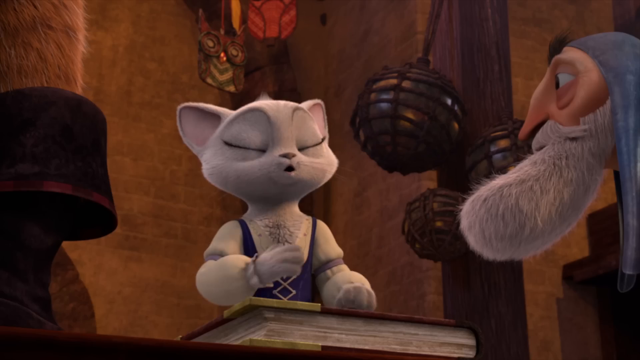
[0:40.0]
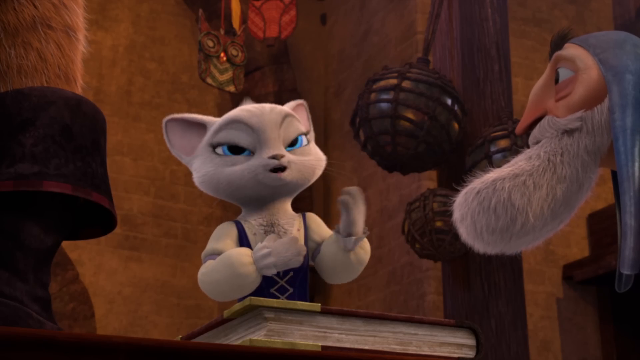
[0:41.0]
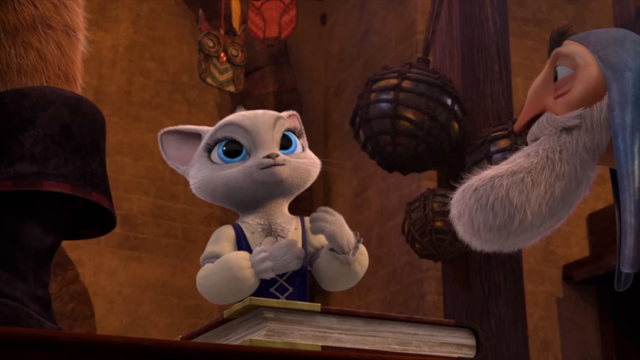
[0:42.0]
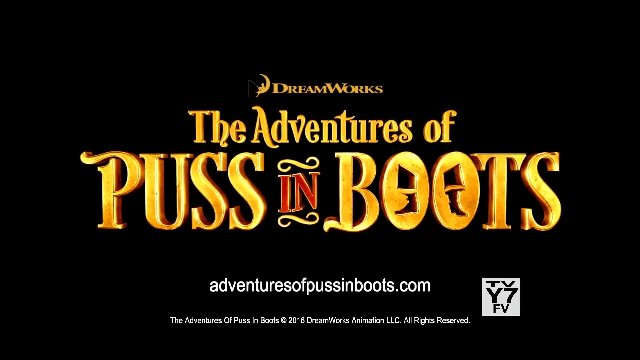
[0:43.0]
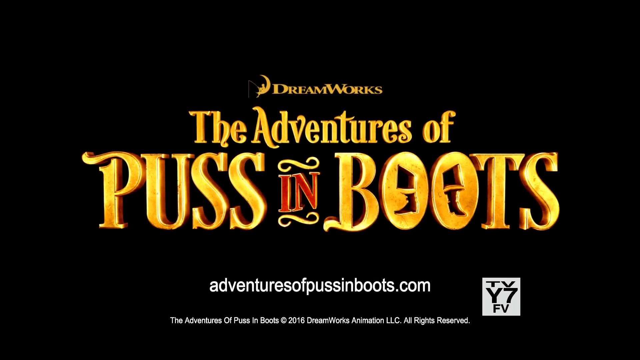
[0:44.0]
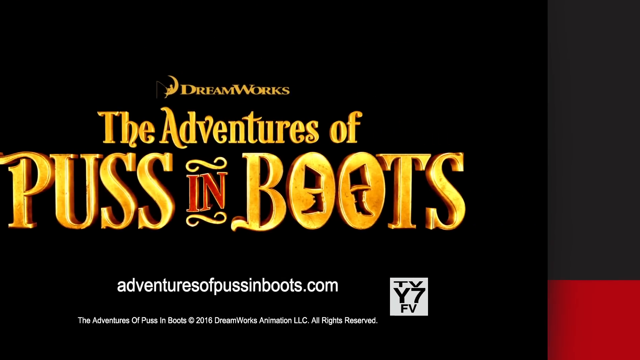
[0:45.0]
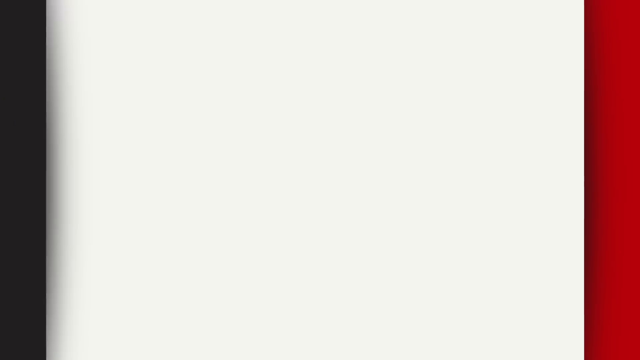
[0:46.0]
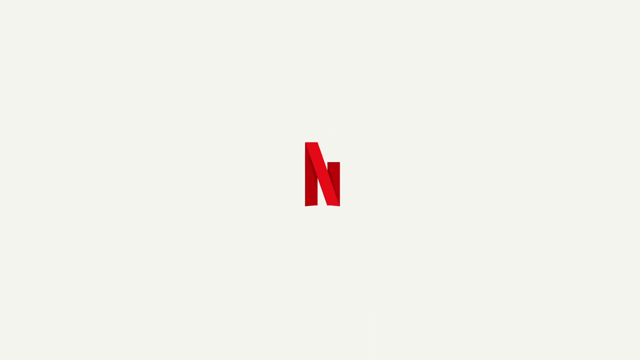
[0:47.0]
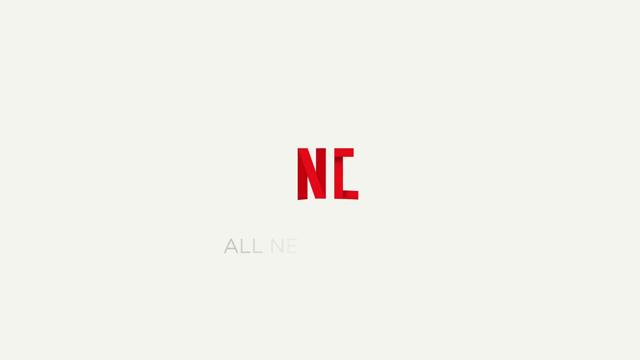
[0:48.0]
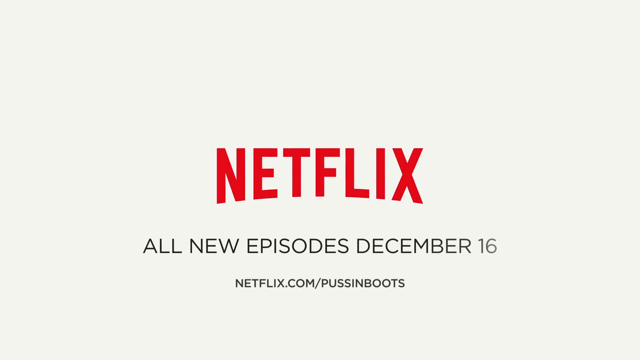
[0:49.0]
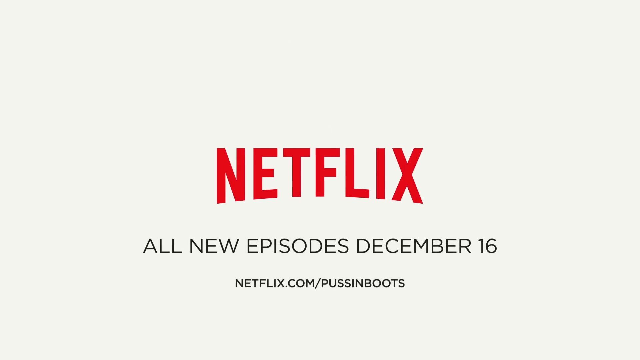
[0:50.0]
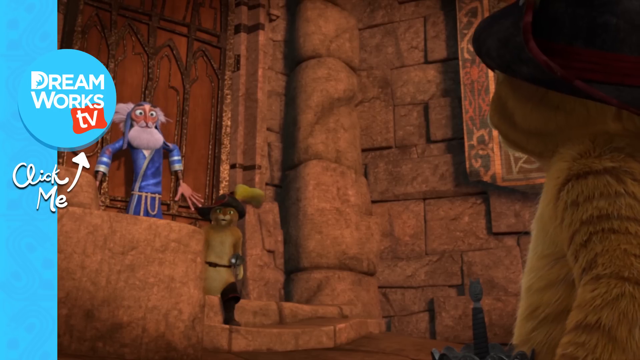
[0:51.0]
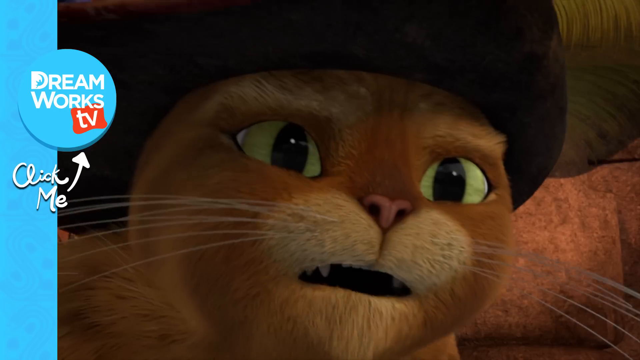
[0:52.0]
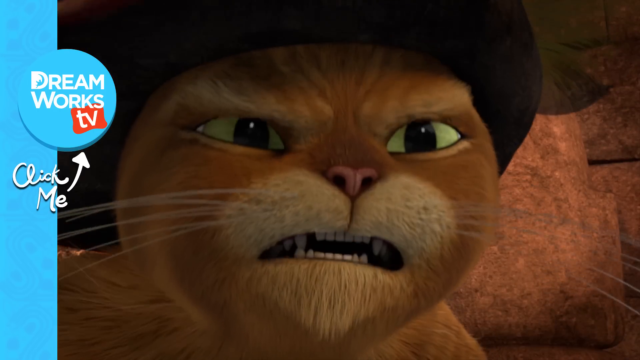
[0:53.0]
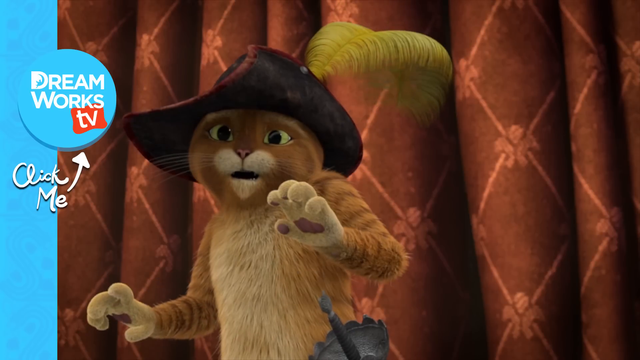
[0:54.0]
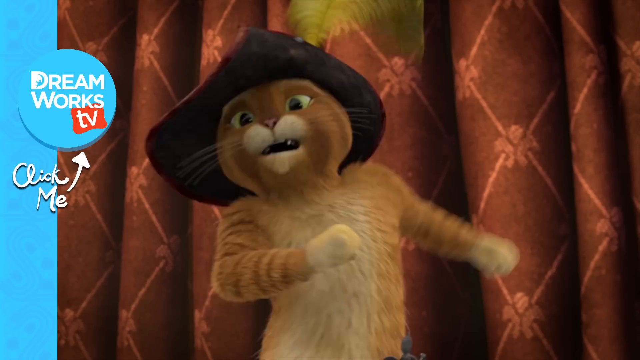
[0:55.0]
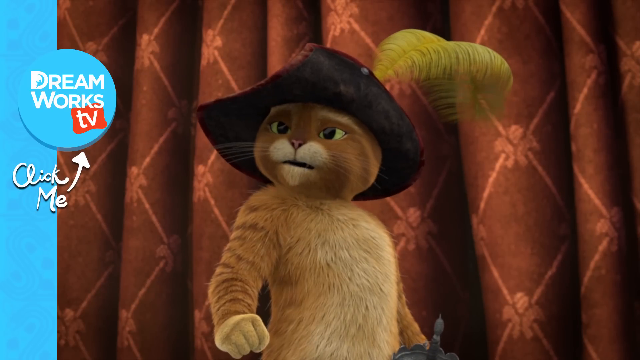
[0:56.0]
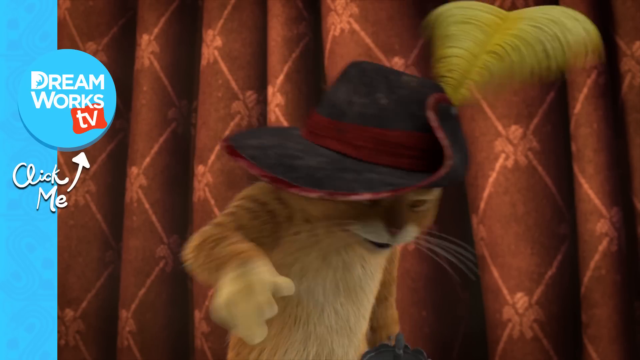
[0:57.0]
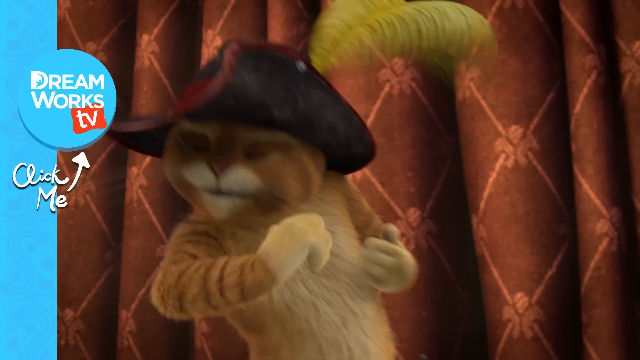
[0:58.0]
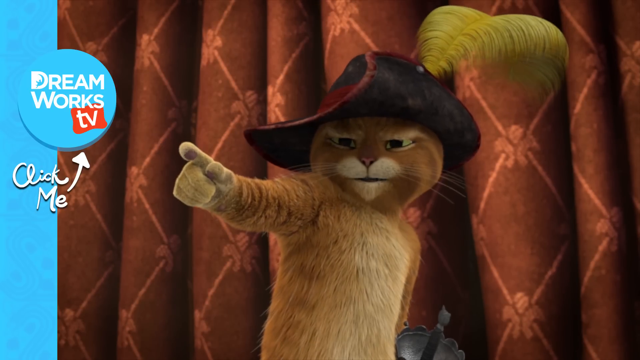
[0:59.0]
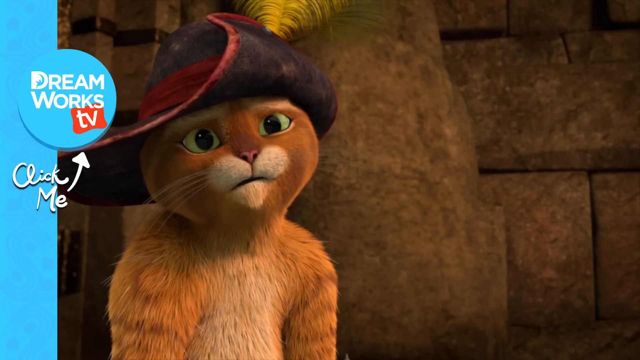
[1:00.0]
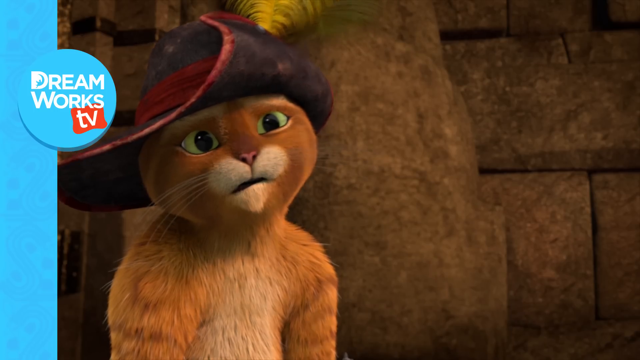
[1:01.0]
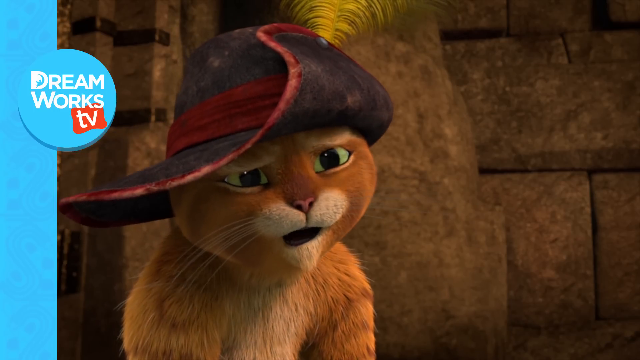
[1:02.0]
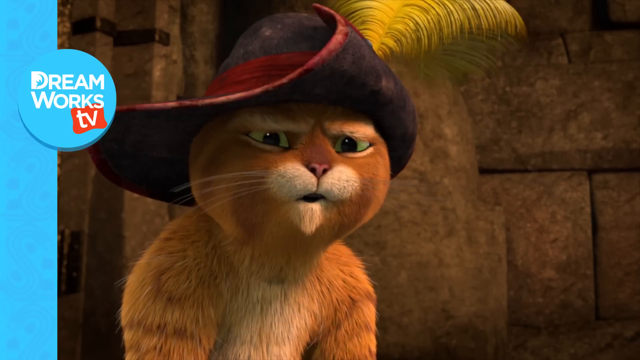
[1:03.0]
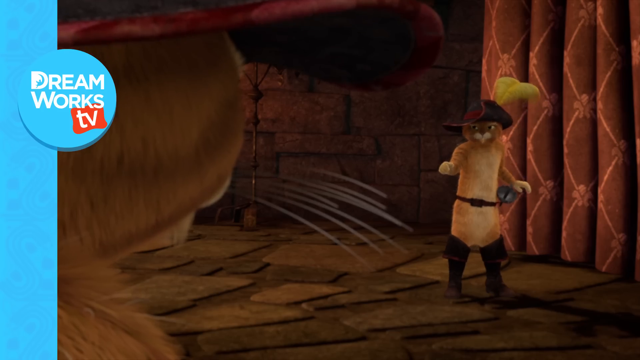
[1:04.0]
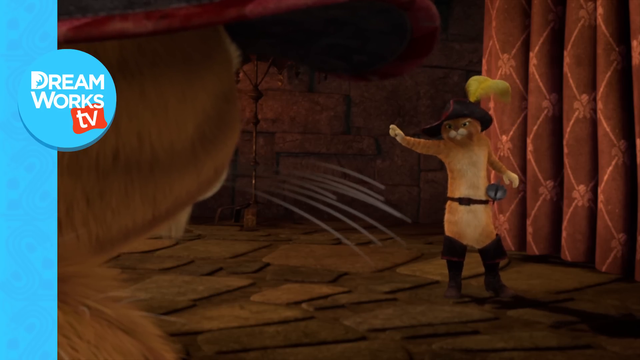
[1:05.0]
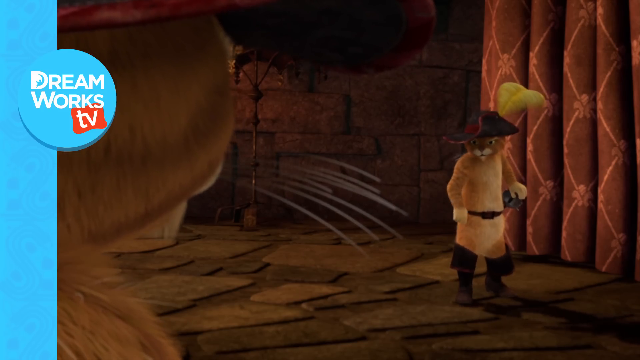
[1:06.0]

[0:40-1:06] The cat is still talking to her friends, one of whom is an old man. Text then appears reading "the adventures of Puss in Boots" and "adventures of Puss in Boots.com", along with "all new episodes December 16" on Netflix. Another cartoon follows, showing kids wearing cowboy hats talking and pointing at each other; one kid talks to another kid who looks like him. This cartoon is for DreamWorks TV rather than Netflix. The last part shows two lookalike brown cats with little white stripes having a conversation; they wear cowboy hats with feathers, a bell, and black boots.